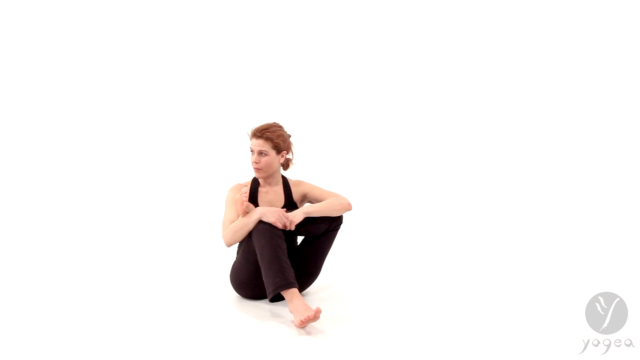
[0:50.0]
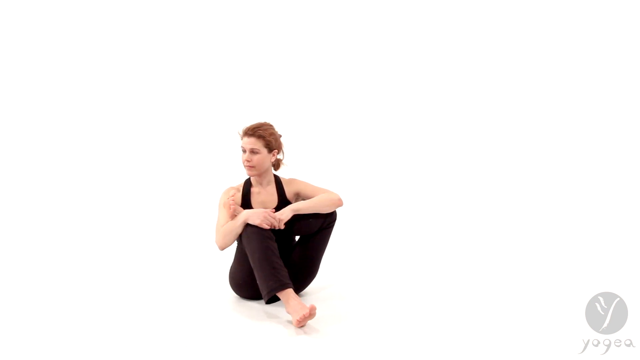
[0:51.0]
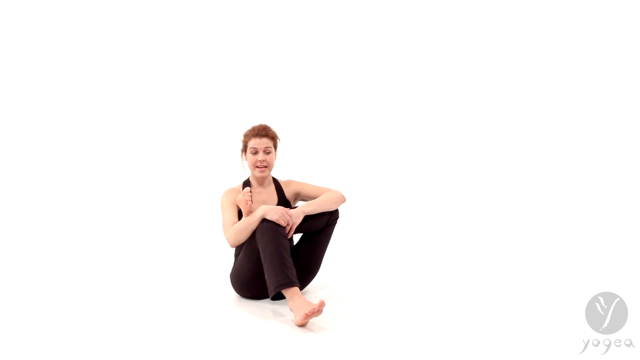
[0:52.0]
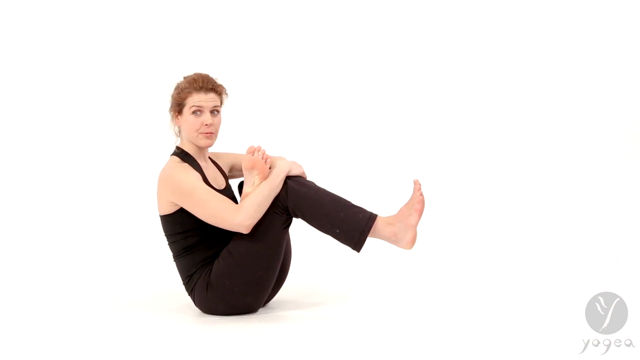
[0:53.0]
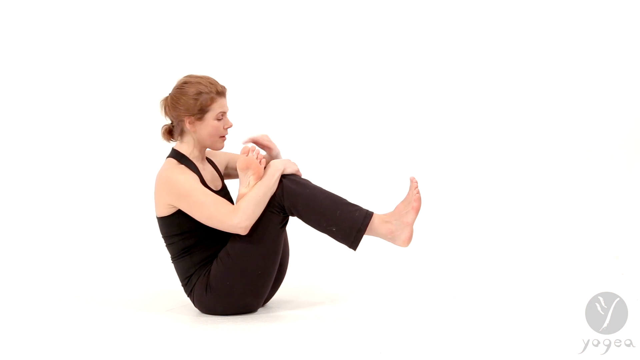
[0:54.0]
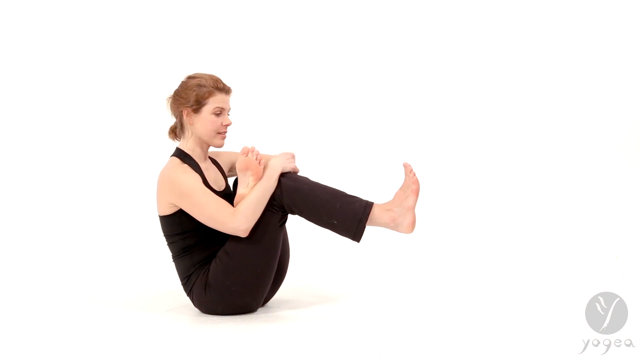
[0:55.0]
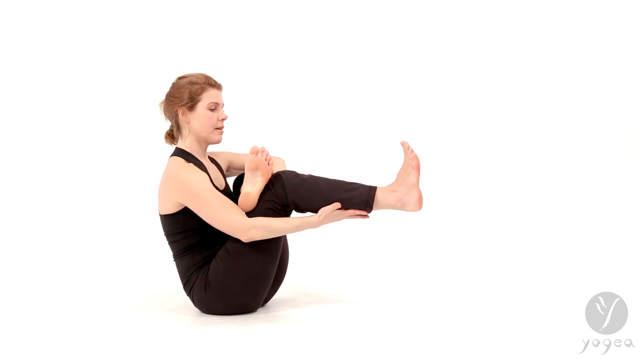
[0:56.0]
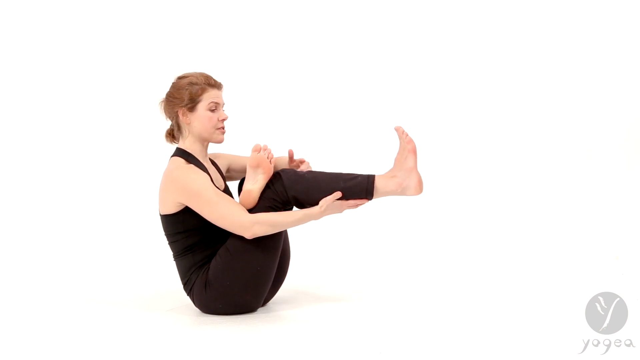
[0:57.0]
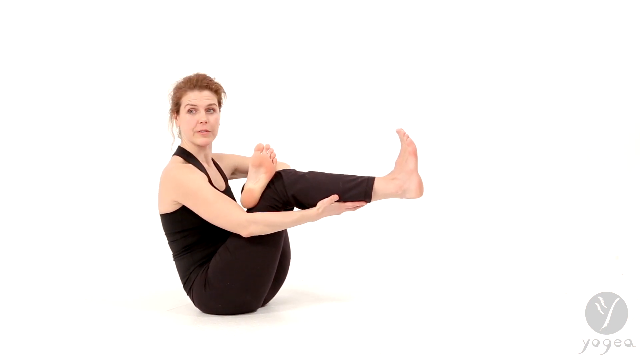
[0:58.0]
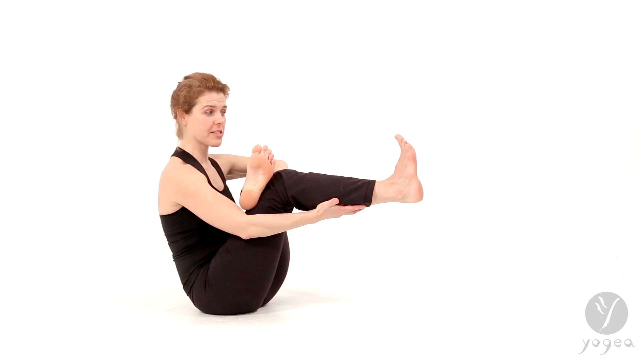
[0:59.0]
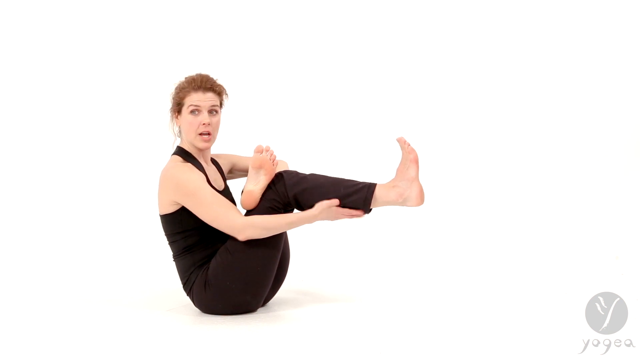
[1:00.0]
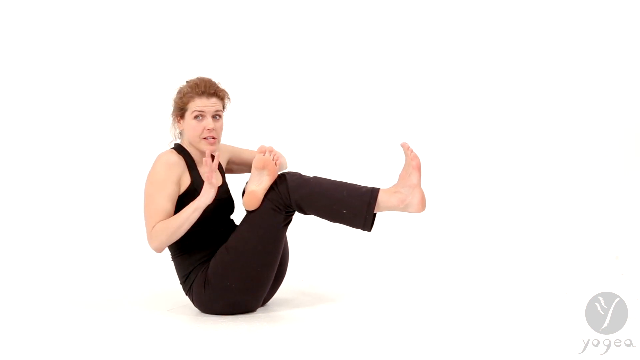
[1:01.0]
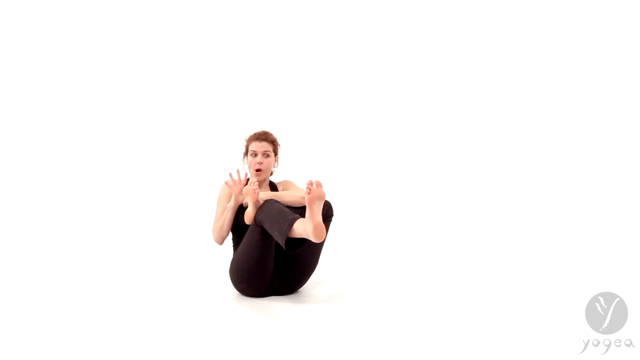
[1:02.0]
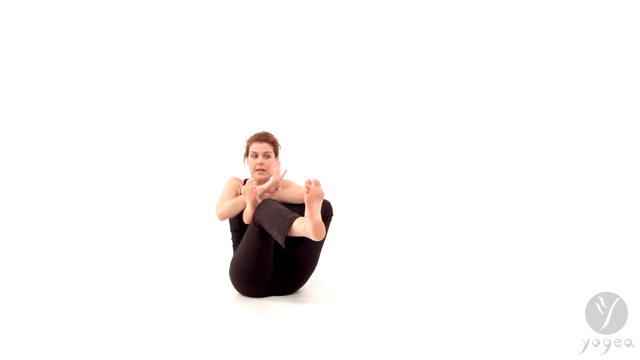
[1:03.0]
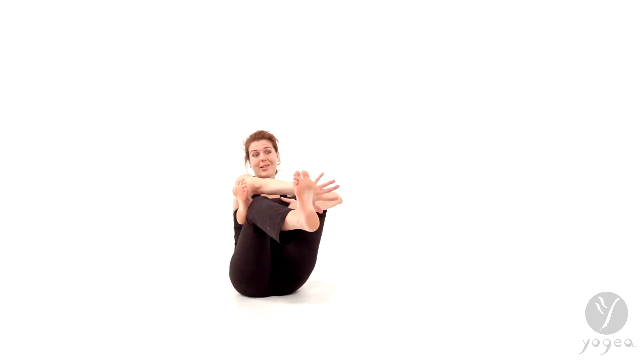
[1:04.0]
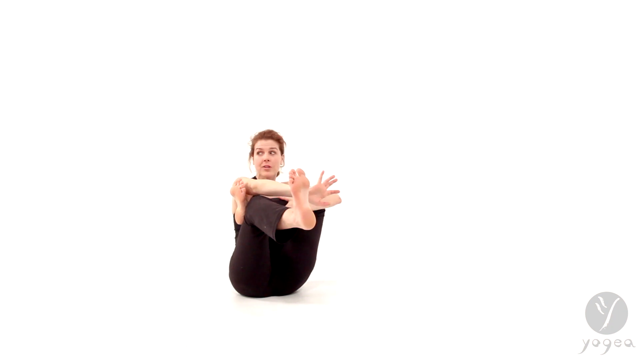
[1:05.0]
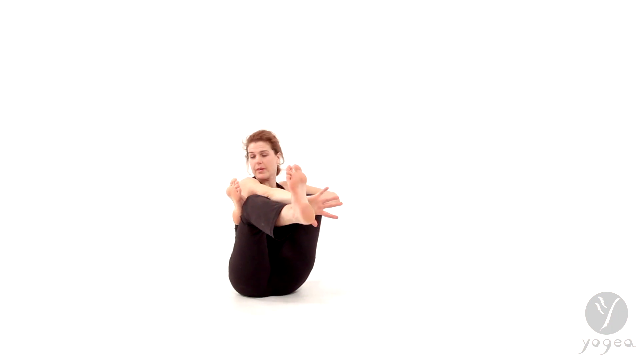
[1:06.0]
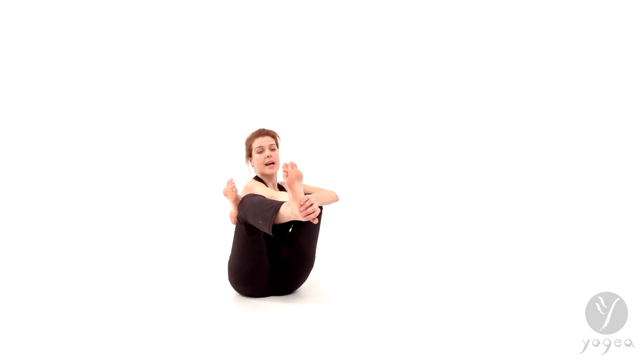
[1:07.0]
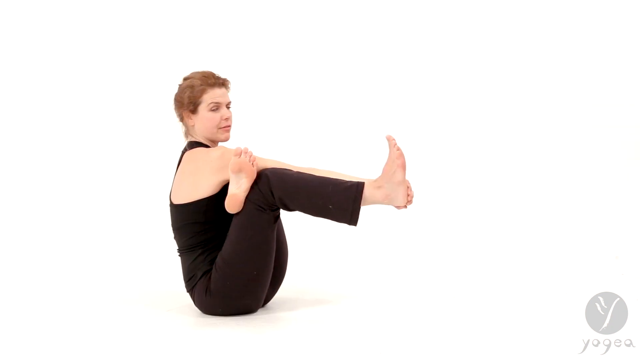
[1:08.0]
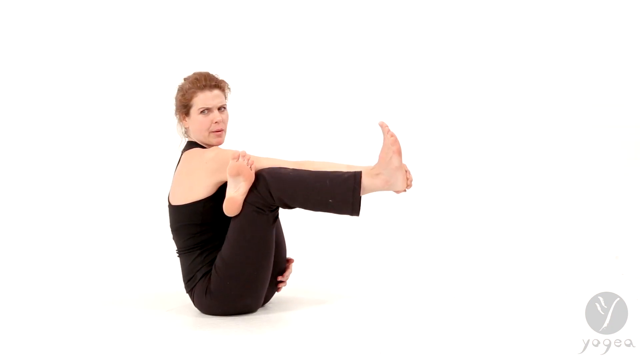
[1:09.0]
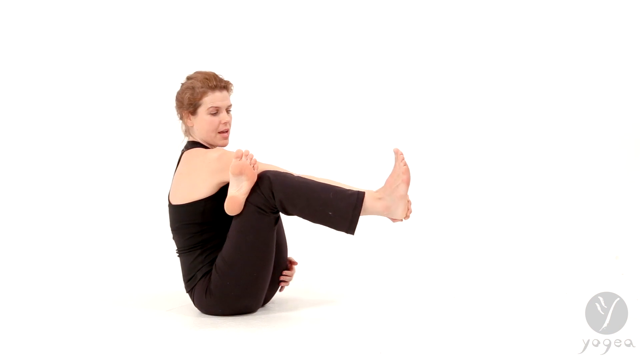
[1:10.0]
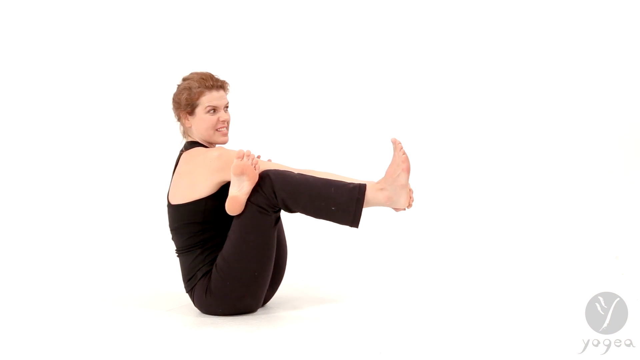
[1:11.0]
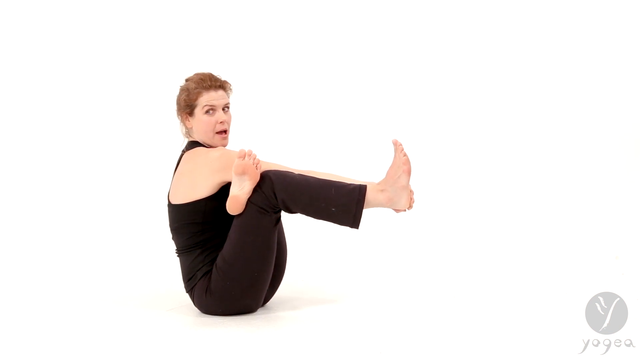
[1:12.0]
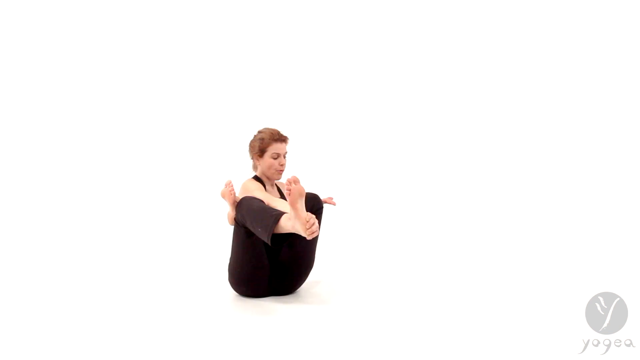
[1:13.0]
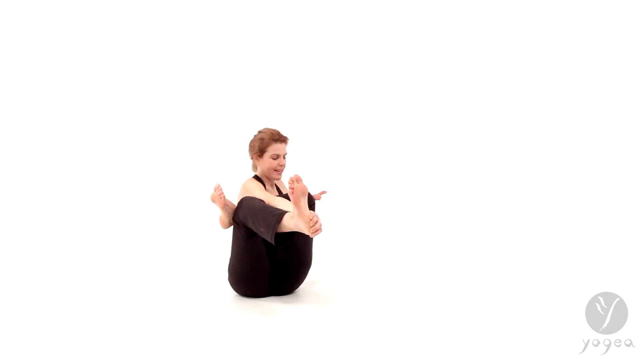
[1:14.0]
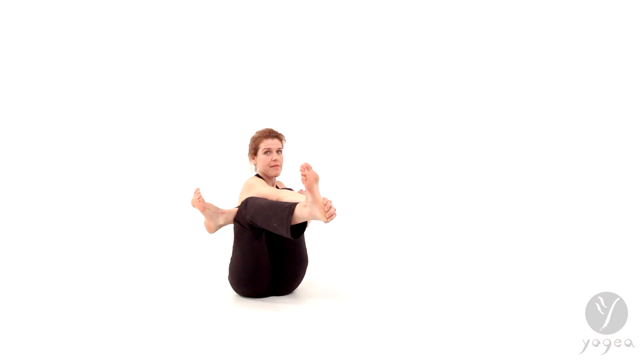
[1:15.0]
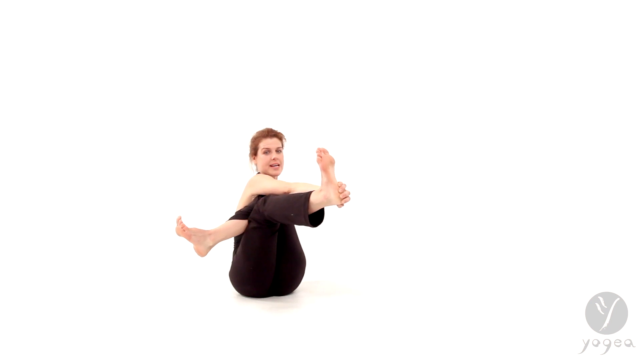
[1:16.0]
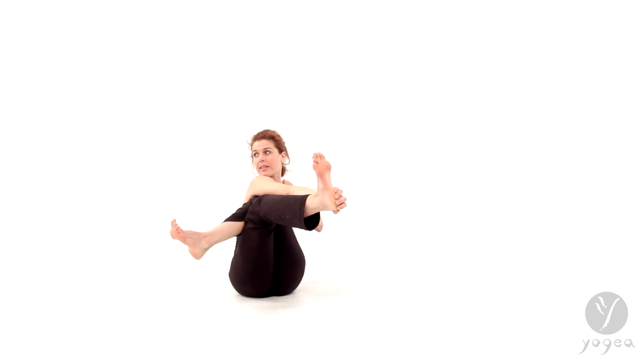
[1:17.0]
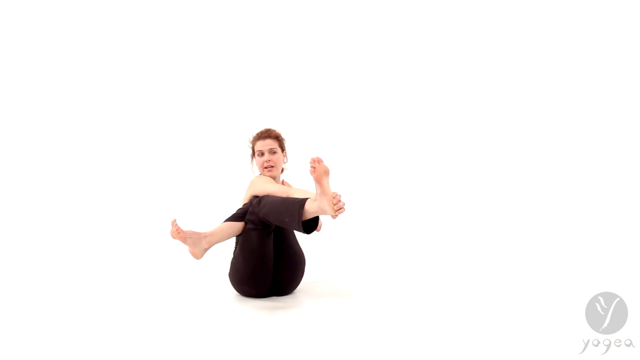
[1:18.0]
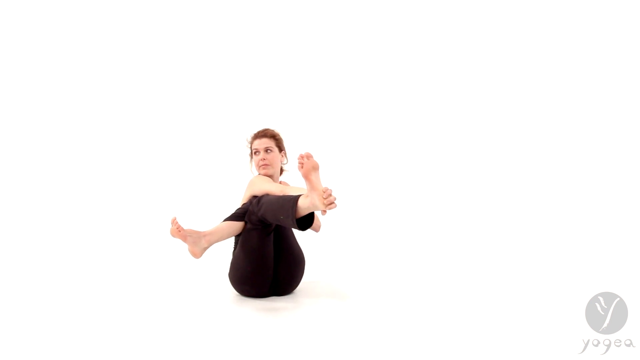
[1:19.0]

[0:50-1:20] The yoga instructor sits on a white floor against a white background, facing the camera. Her bottom is on the floor, and her left leg is bent so that her foot rests against her right knee, with a heel on the ground. Her right arm is bent over her right knee, and her left arm rests on her left leg in a bent position, with the hands together. She gently rocks from side to side in this position, then lifts her right heel about a foot from the ground, holding her right knee in her right hand with her arm bent. Her left foot rests in front of her right knee. She scratches her nose with her left hand, then places her right arm flat underneath her calf and raises her right leg a little more so that it is parallel to her chest. Her left foot is still against her right knee. She flexes the toes of her right foot a little and touches her right shoulder with her left hand, then stretches her right arm out towards her outstretched right leg, grabs the heel and gently moves it up and down, releasing her left hand, with which she holds the back of her left thigh. She moves her right leg up and down with her right arm, raises her left hand, and gently pushes her left leg so that the foot is stretched away from her body; her left calf has now gone beyond her right leg.